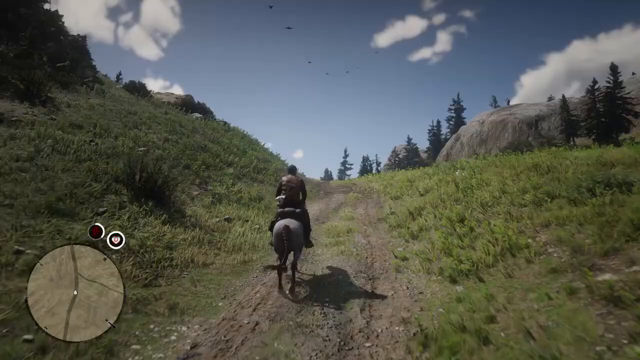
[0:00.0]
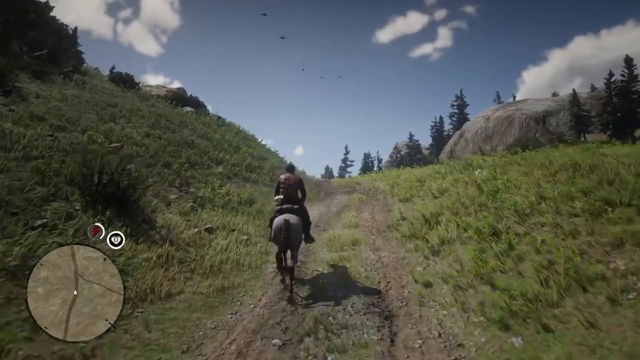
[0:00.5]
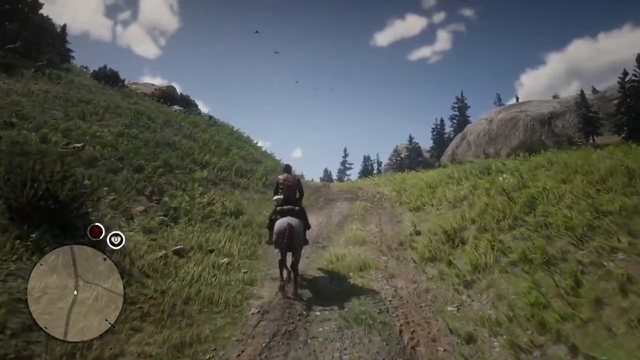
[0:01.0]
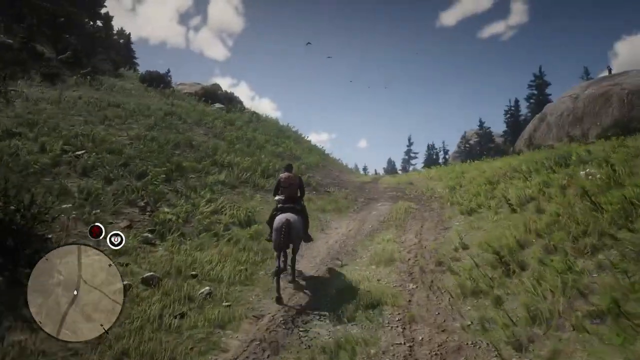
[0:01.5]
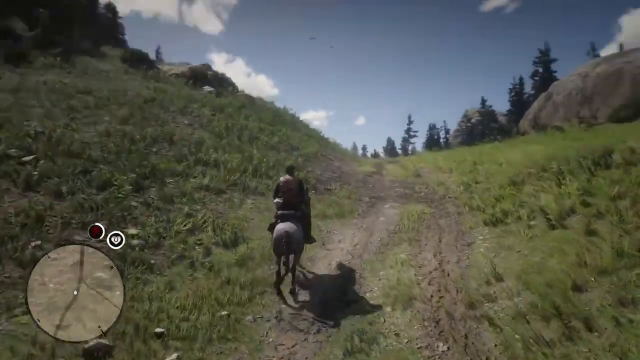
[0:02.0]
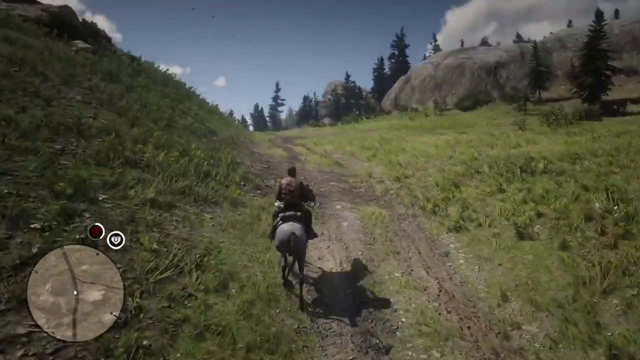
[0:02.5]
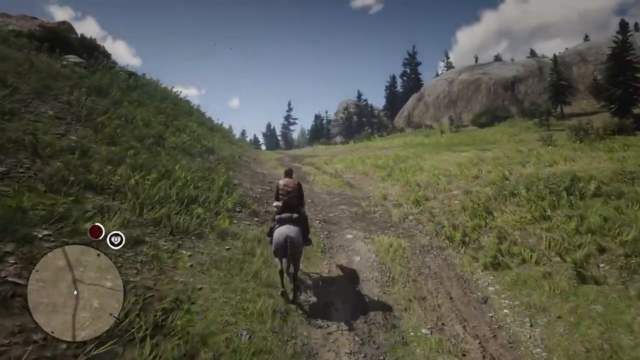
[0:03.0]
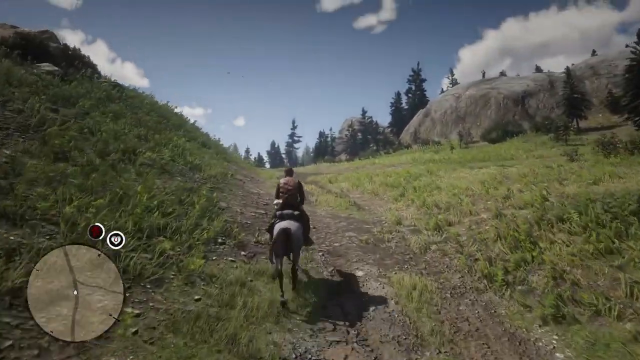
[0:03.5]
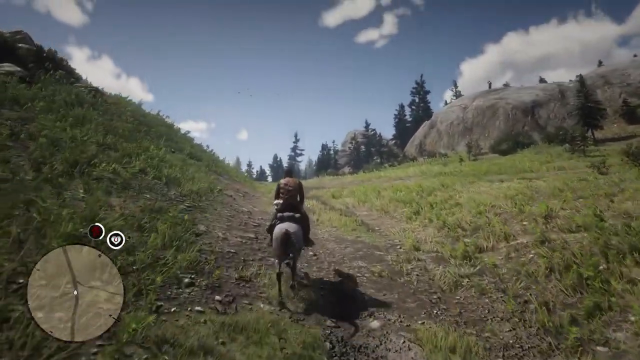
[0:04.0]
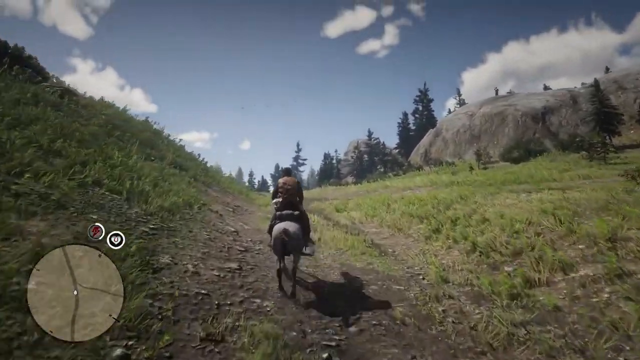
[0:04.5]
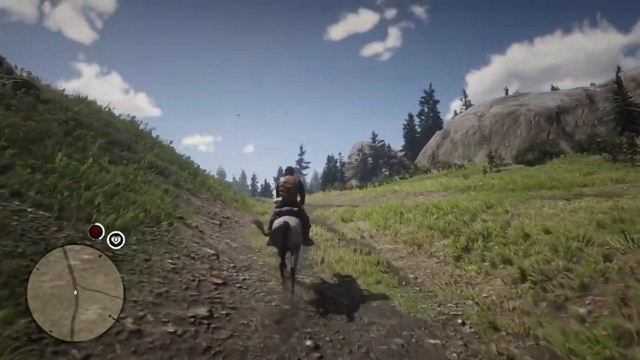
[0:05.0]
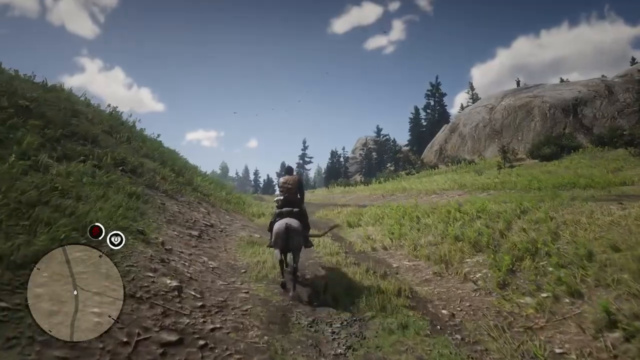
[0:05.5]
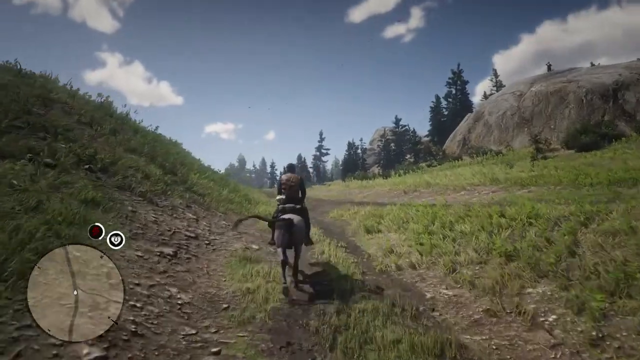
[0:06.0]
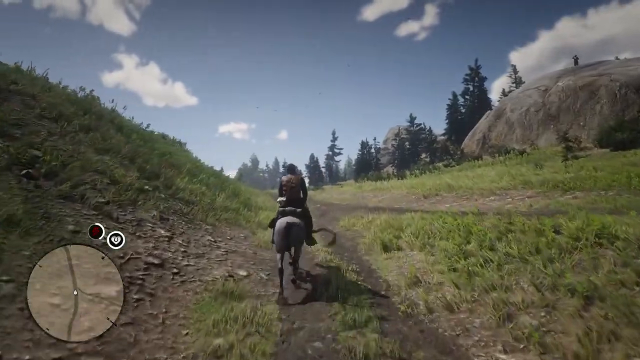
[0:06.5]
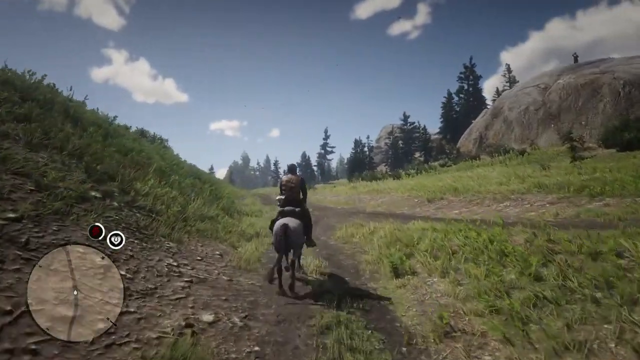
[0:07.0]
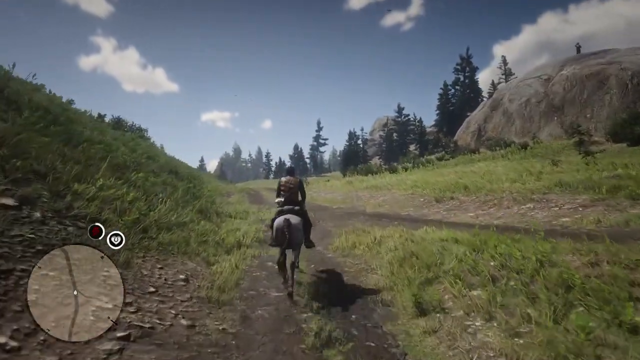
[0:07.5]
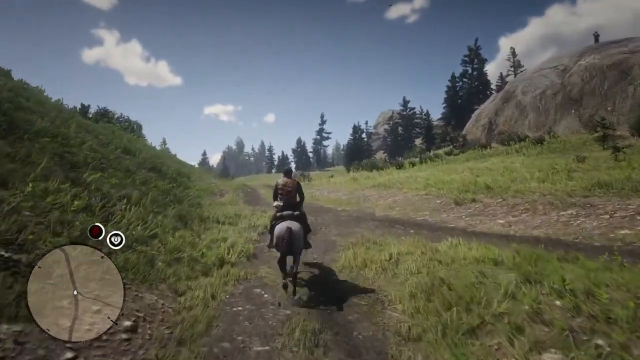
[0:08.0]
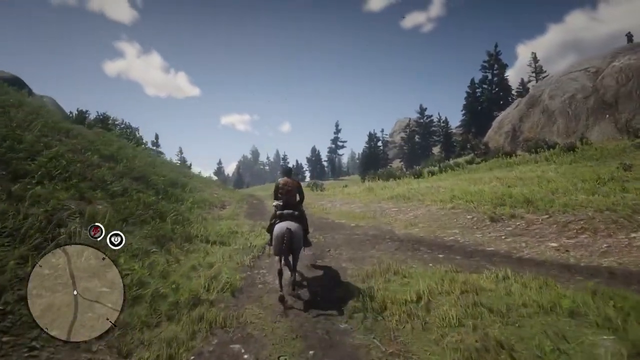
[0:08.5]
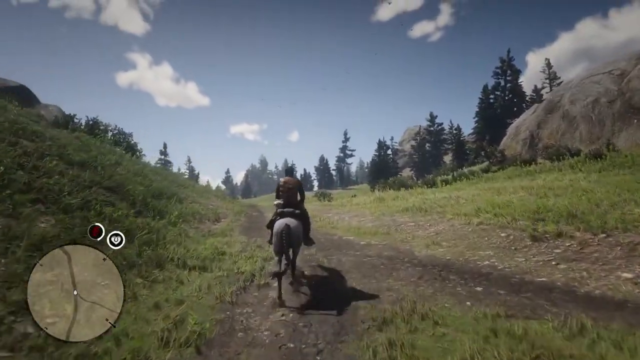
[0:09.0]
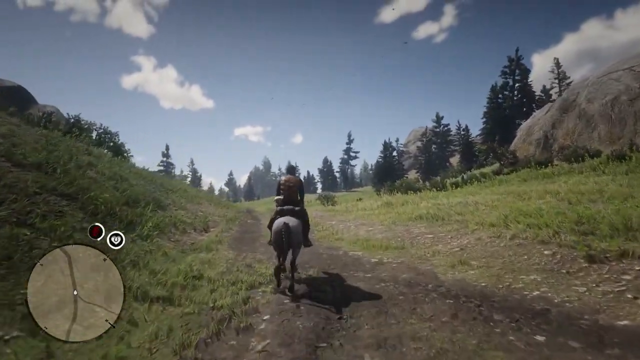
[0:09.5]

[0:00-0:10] Gameplay is shown that looks somewhat like Red Dead Redemption. A mini-map in the bottom left corner shows a little white dot roughly on the path that the person with the horse is on, and above it are some other icons, apparently a health icon and another icon. The landscape has a lot of grassy areas, some rocks and trees. They walk along the path until they reach another path that connects to yet another path, then go straight, and a bunch of what seem to be deer come out. What looks like birds fly in the air as well.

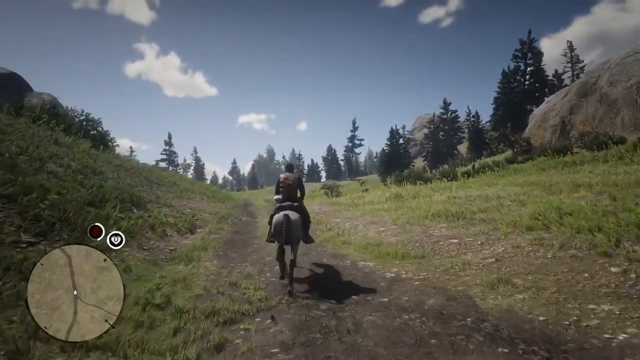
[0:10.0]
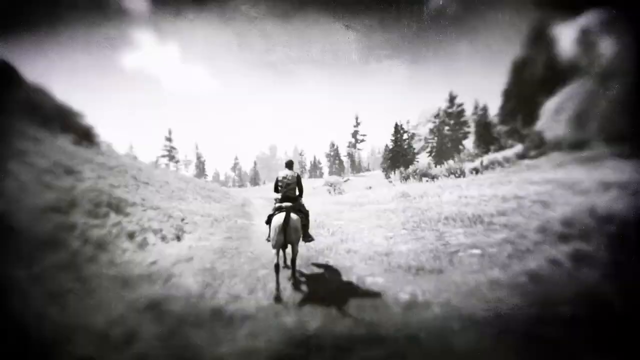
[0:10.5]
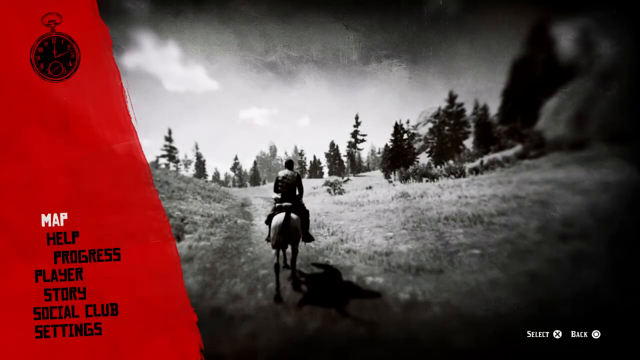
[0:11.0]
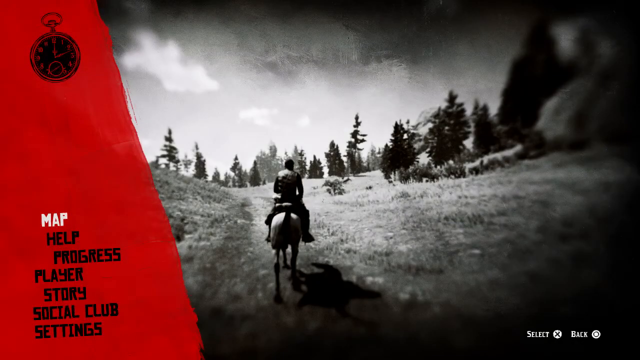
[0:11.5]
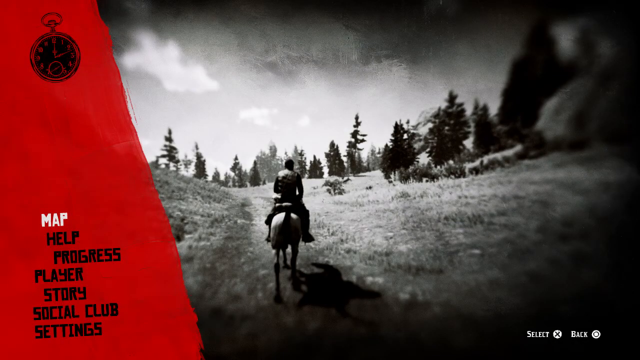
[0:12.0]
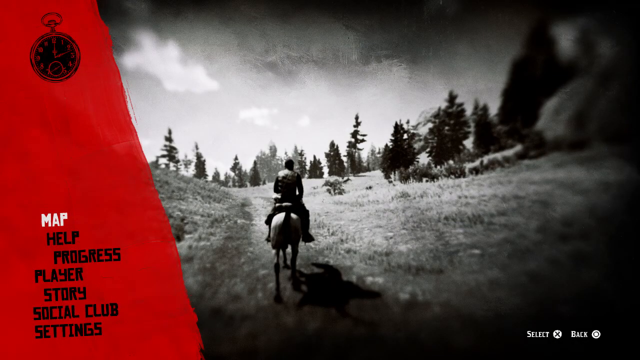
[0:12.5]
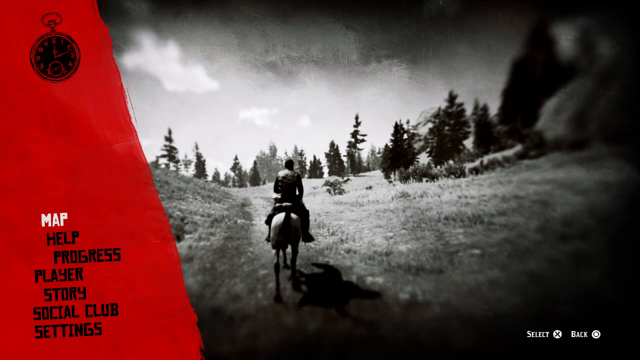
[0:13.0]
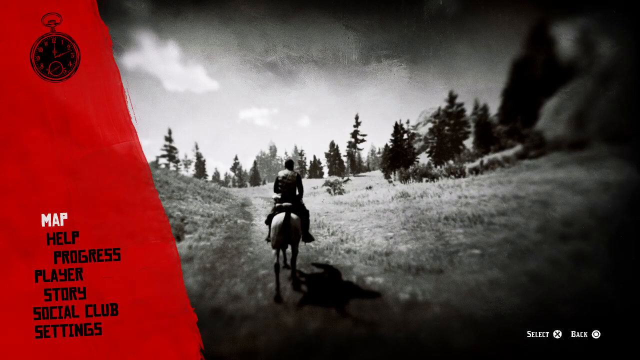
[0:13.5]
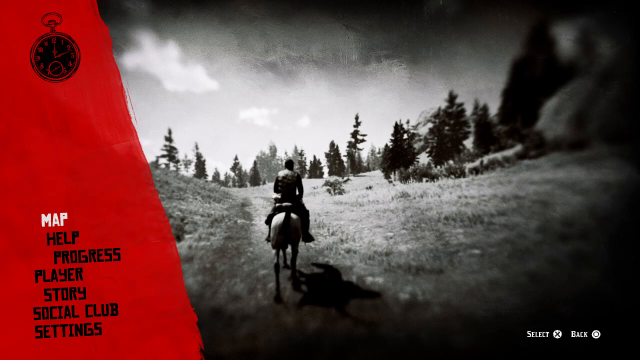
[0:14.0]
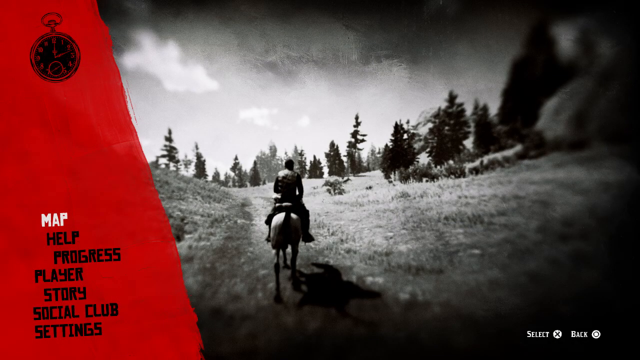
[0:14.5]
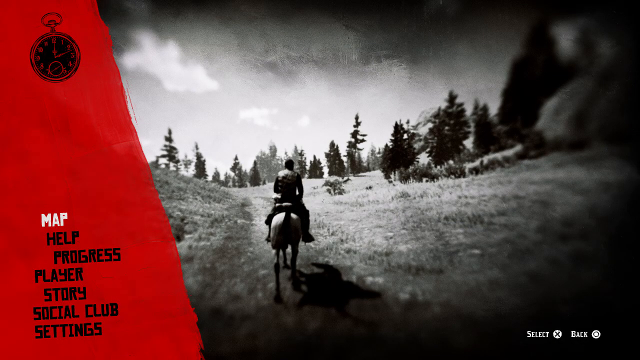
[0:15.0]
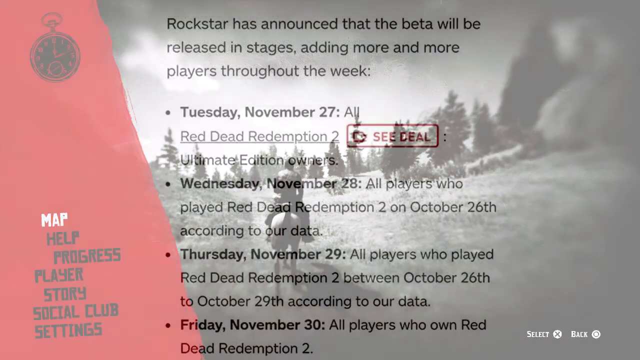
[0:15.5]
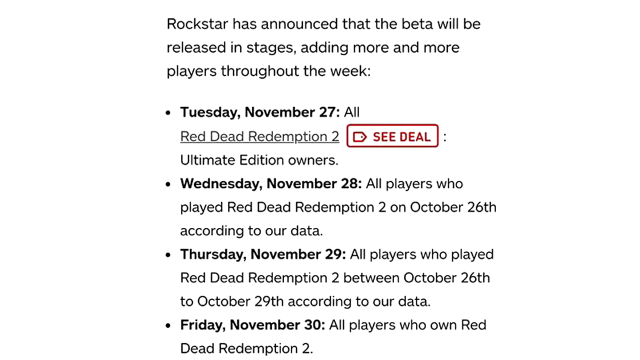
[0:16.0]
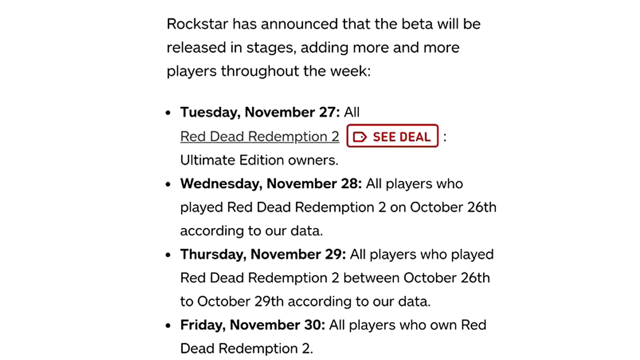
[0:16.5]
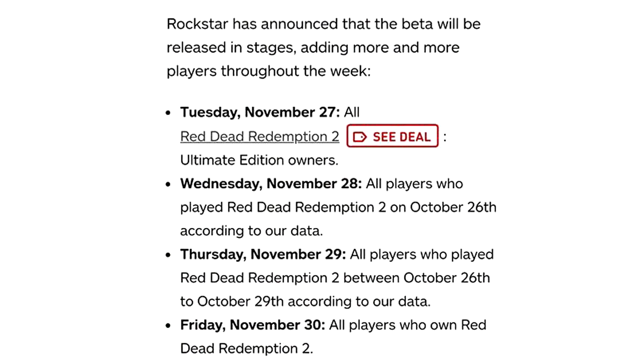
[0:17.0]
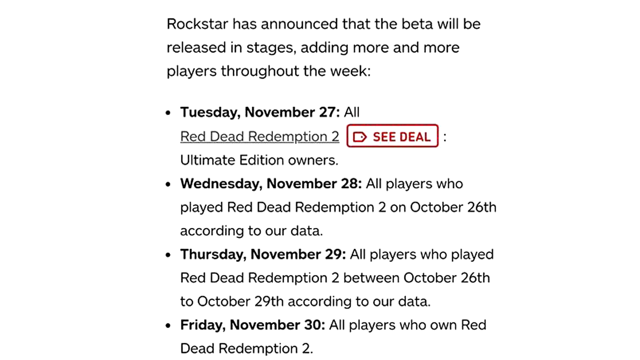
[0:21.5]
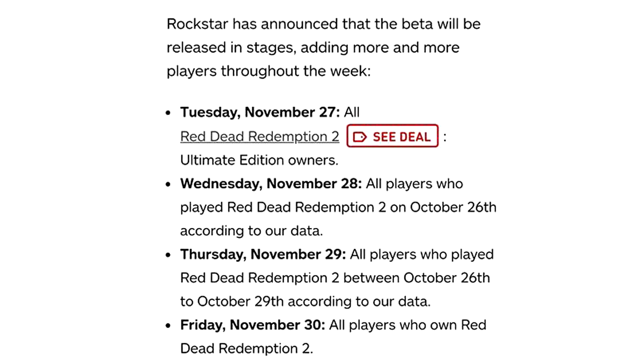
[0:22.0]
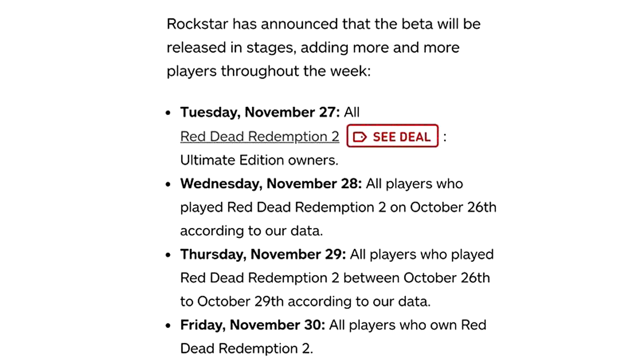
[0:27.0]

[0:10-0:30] Gameplay that looks like Red Dead Redemption shows a person on a horse on a path, surrounded by grassy areas with some trees and large rocks. It is very sunny with some clouds. A mini-map in the bottom left corner shows the player on the path, along with a little health bar and another icon next to it that looks like it is only halfway full. They walk along the path, then pause the game, and a menu shows map, options, help, progress, player, story, social club, and settings. The screen stays on this menu for a bit, then transitions to a white background with black text that reads: "Rockstar has announced that the beta will be released in stages, adding more and more players throughout the week." It lists "Tuesday, November 27th, all Red Dead Redemption 2 Ultimate Edition owners," with an option for a C deal; "Wednesday, November 28th, all players who played Red Dead Redemption 2 on October 26th, according to our data"; "Thursday, November 29th, all players who played Red Dead Redemption 2 between October 26th to October 29th, according to our data"; and "Friday, November 30th, all players who own Red Dead Redemption 2." The text stays on the screen for a period of time.